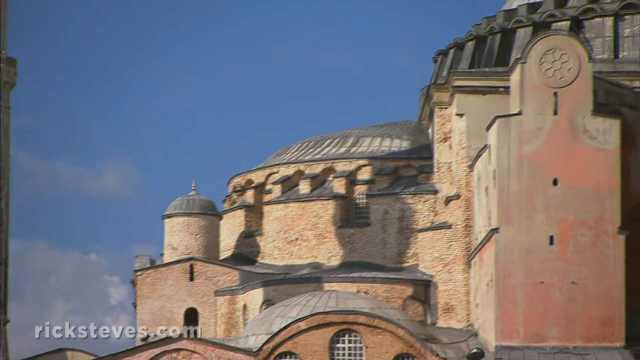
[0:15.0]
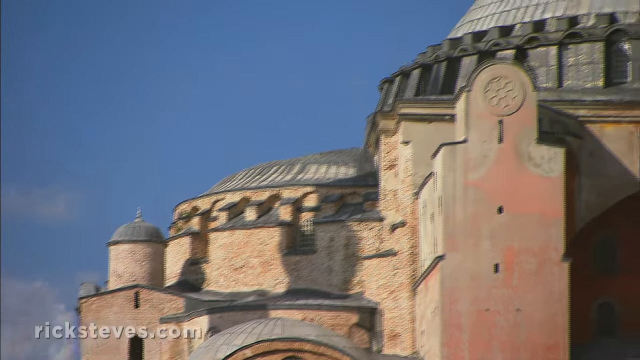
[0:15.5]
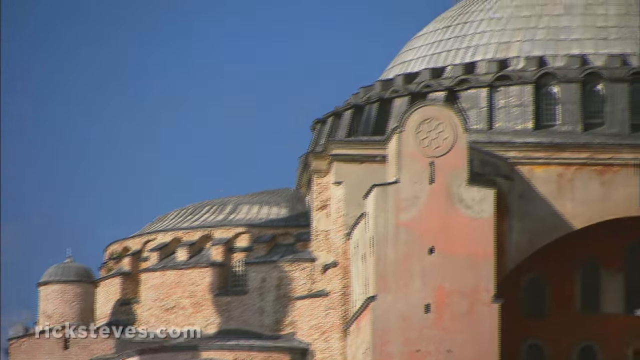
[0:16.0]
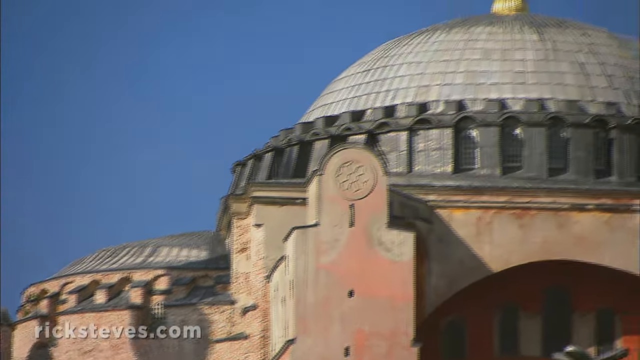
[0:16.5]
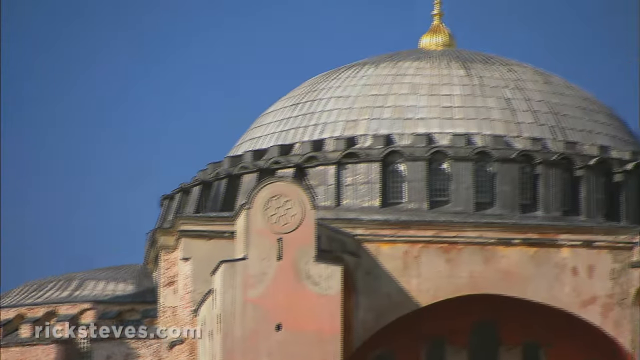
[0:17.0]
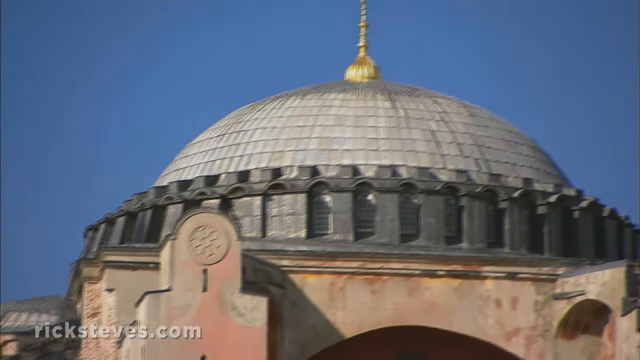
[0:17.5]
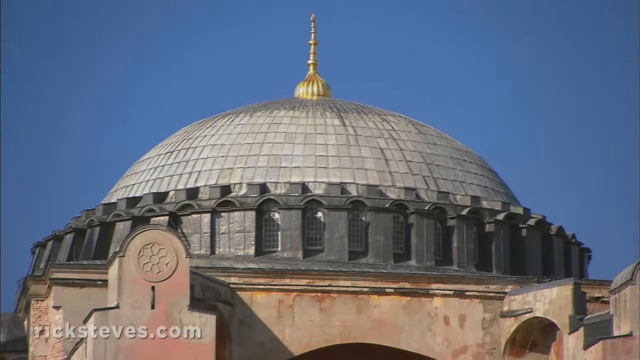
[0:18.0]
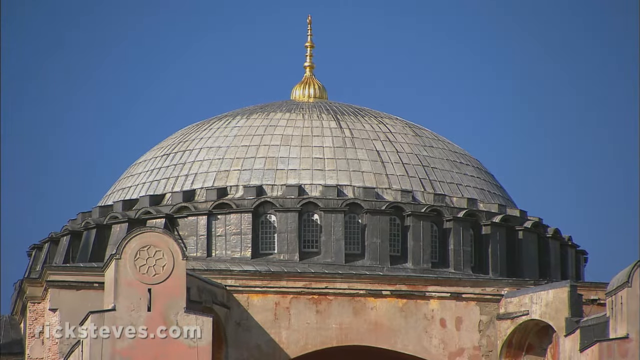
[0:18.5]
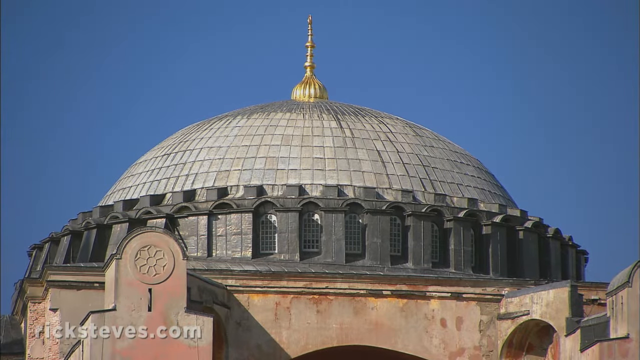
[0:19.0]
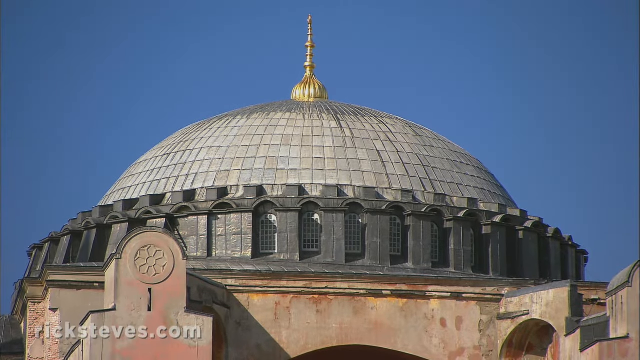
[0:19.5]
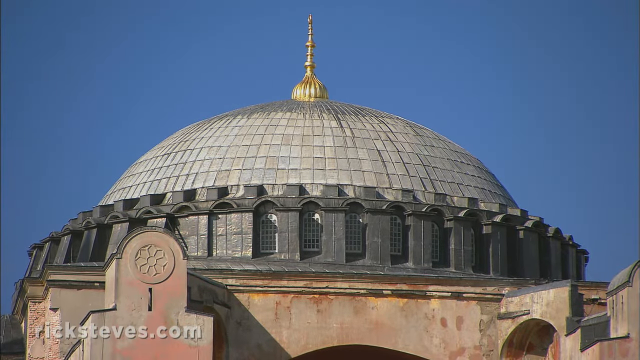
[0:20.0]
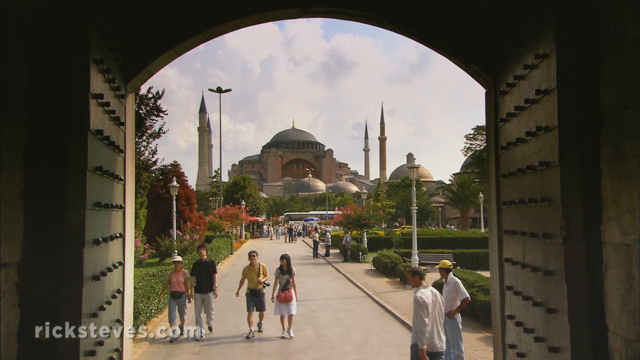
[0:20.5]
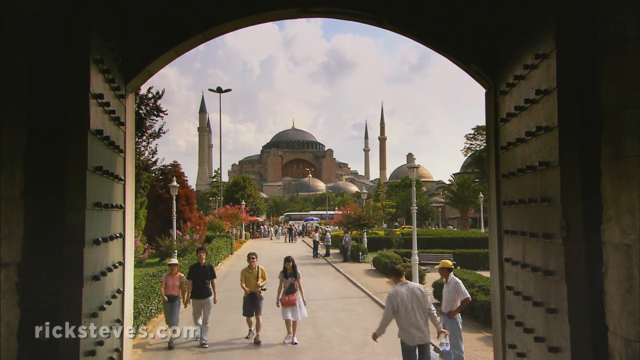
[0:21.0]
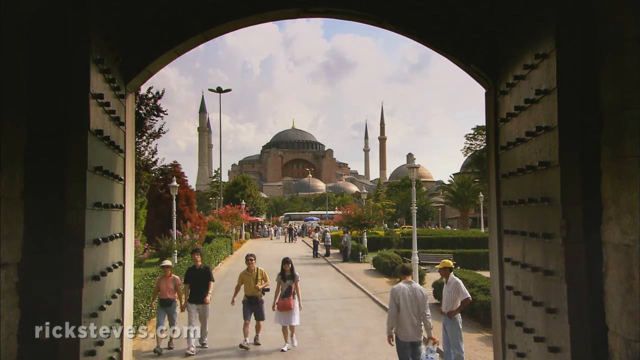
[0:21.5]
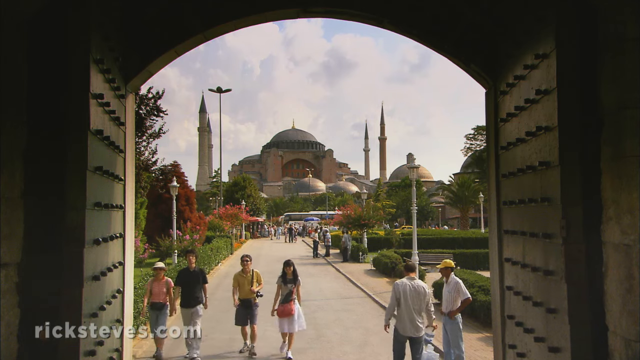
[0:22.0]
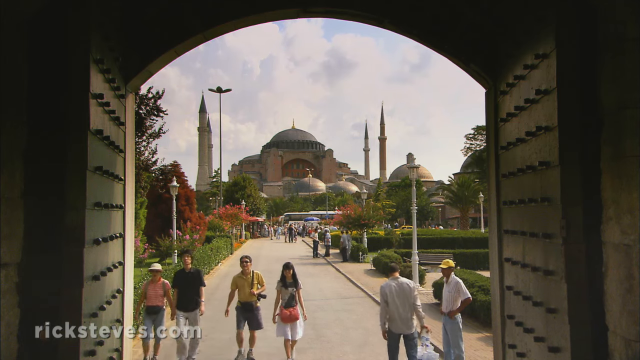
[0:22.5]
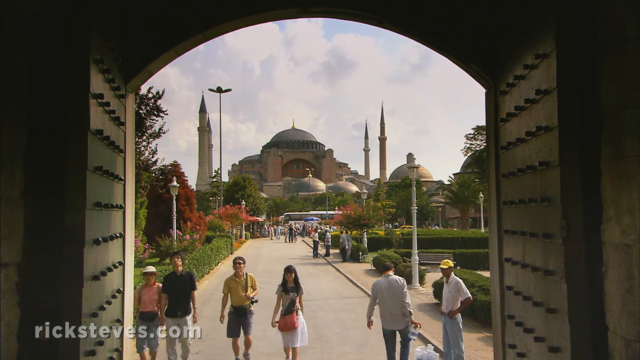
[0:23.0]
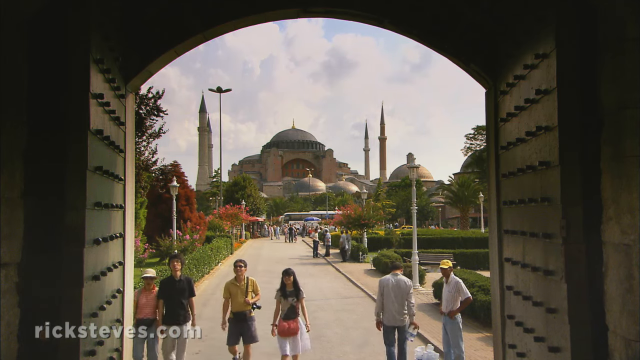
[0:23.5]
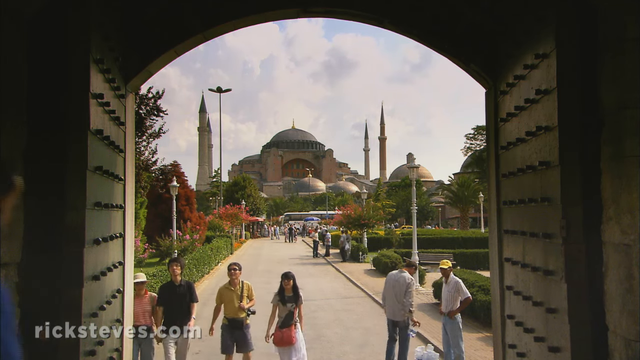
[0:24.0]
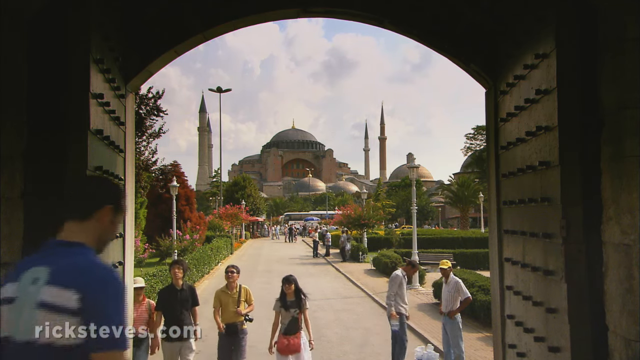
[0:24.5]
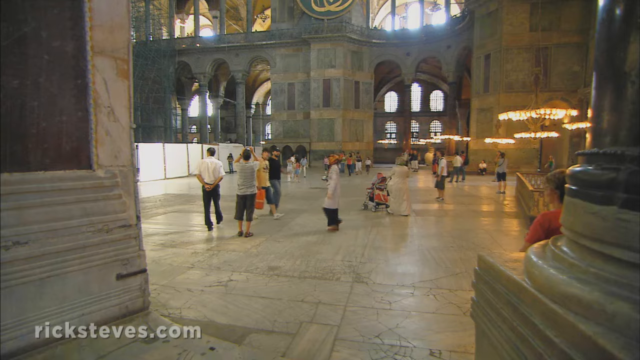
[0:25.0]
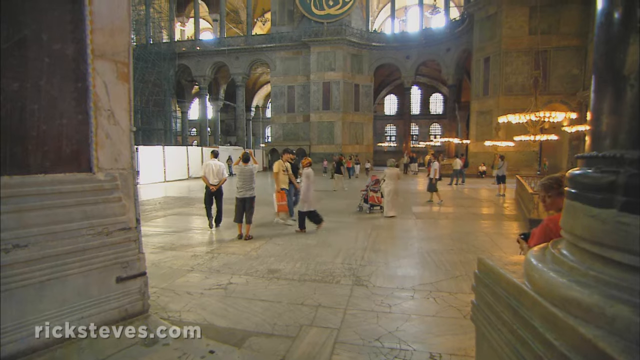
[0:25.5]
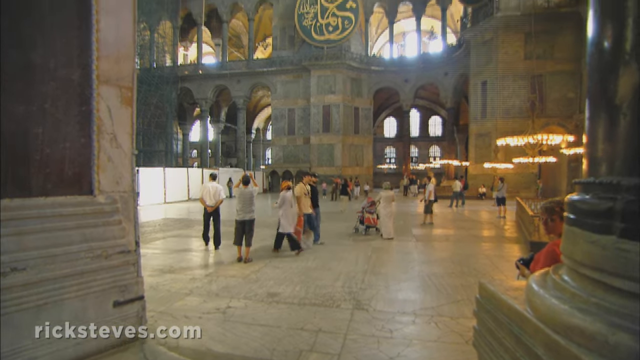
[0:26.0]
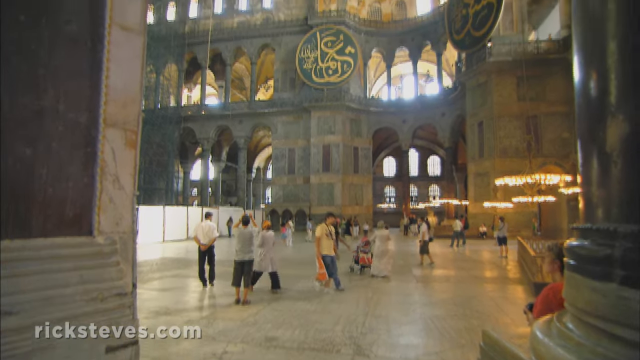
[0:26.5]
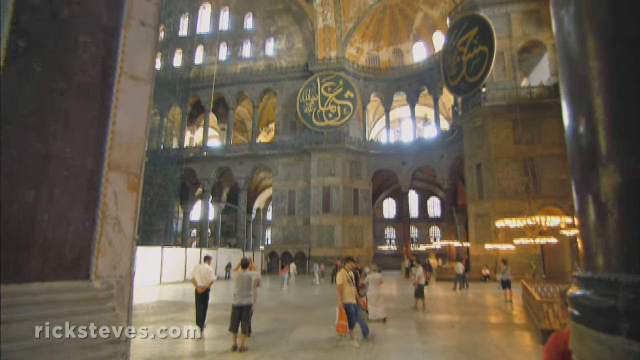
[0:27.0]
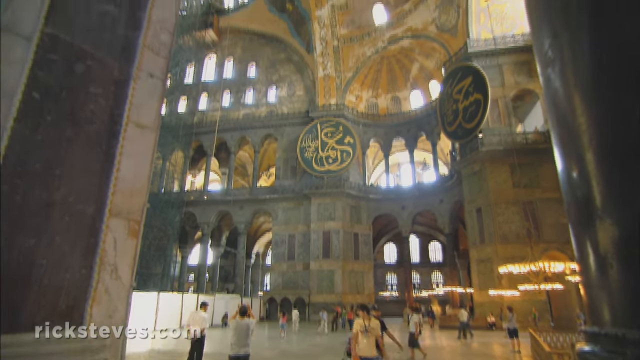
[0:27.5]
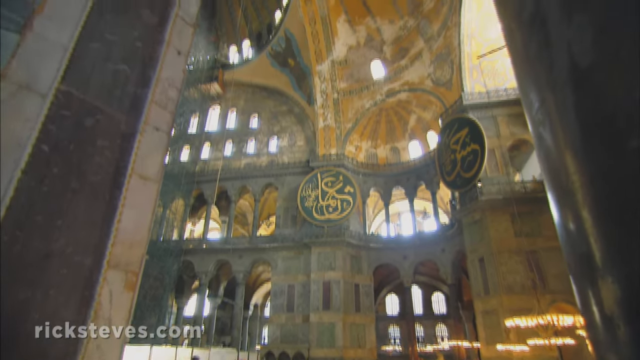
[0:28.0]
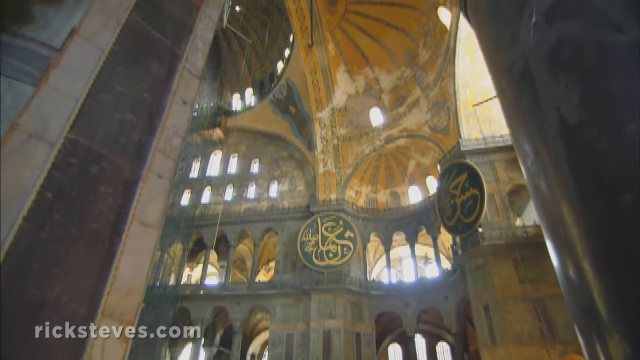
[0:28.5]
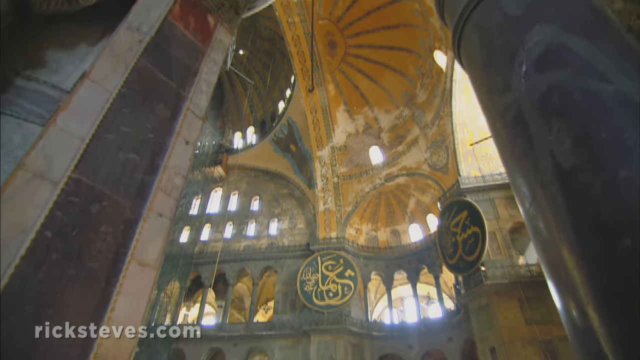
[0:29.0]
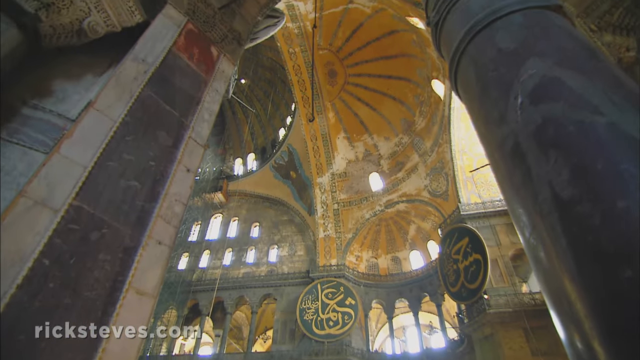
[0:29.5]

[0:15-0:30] The camera zooms in on the large palace-like mosque. There seems to be a flower-shaped indentation or printed mark on the top of the building. The building has a glass ceiling with a golden antenna, and the circular ceiling has silver plating. The camera pans to the entrance, where people walk through and enter. Along the pathway there is a tour bus and many happy tourists, with people walking by. Inside, the building is grand, with Arabic lettering carved in a circle in gold and blue. The building looks very old but grand.